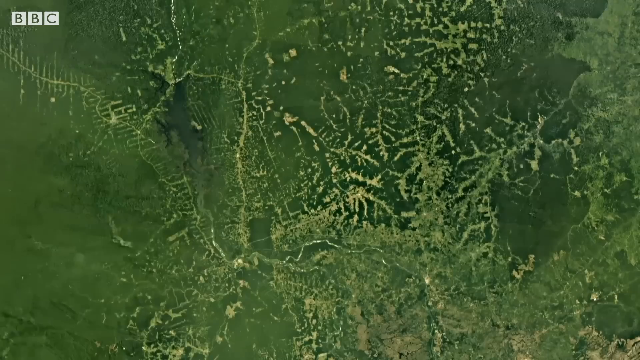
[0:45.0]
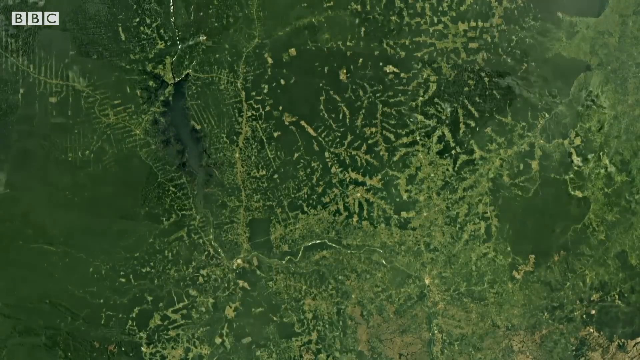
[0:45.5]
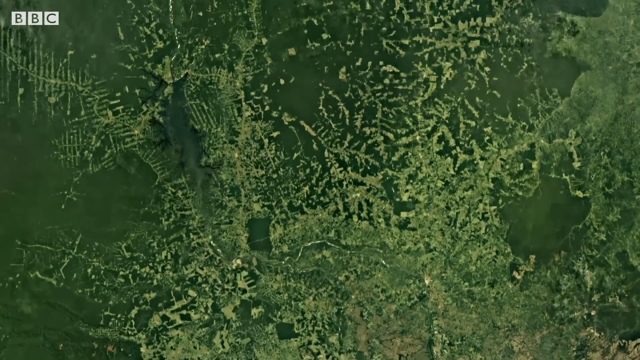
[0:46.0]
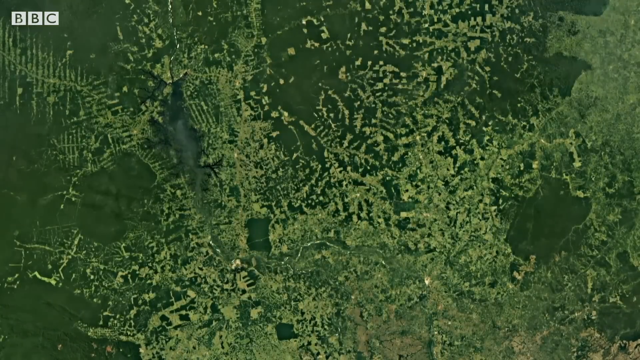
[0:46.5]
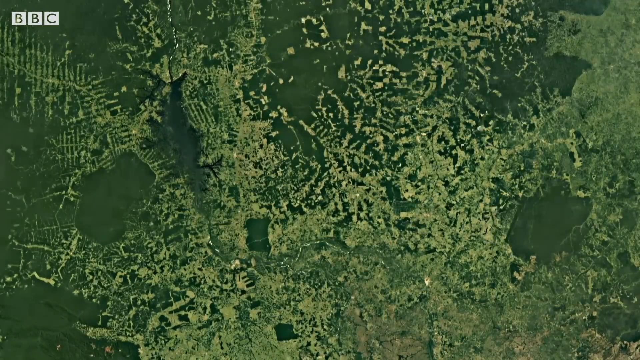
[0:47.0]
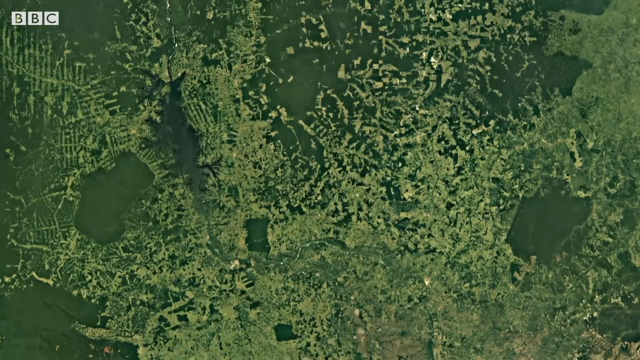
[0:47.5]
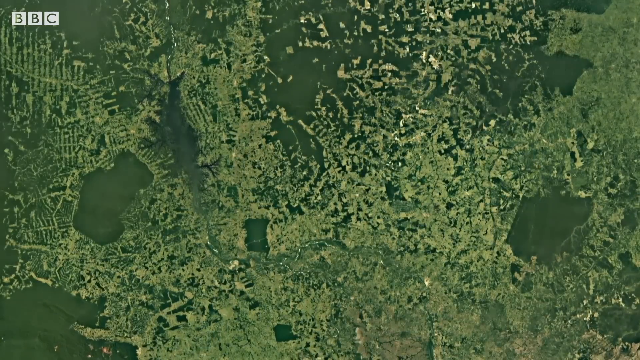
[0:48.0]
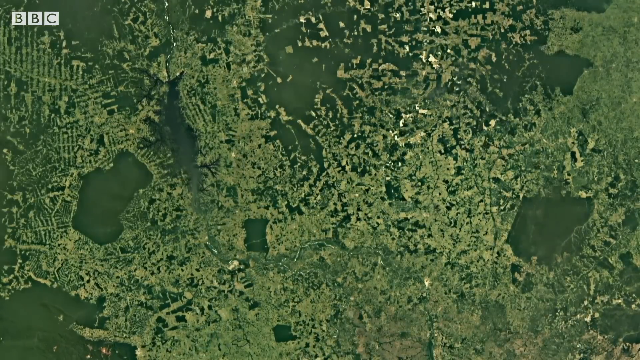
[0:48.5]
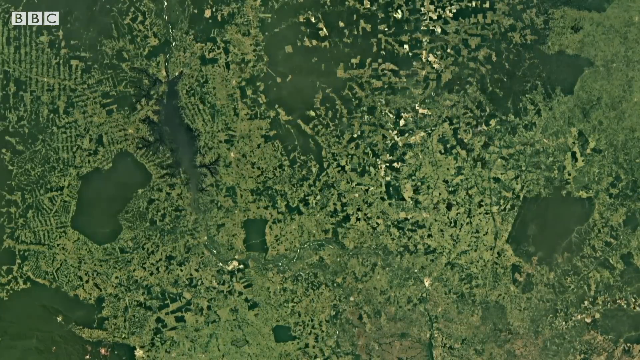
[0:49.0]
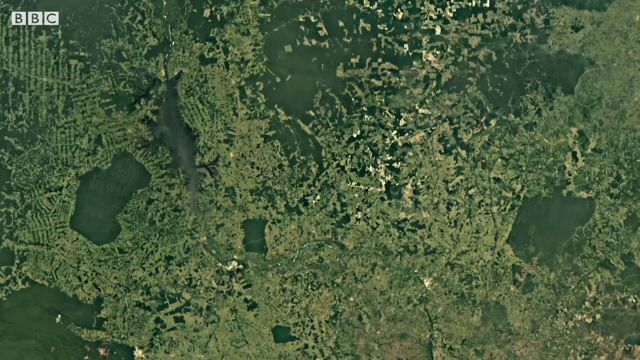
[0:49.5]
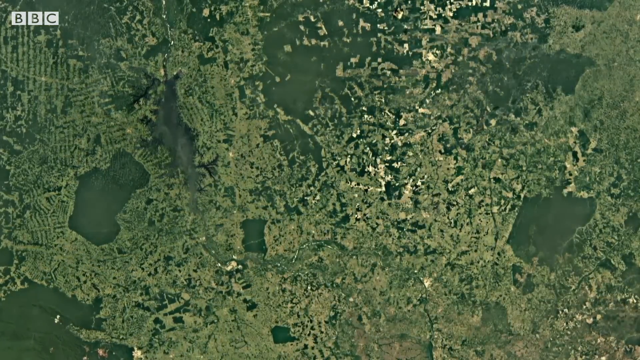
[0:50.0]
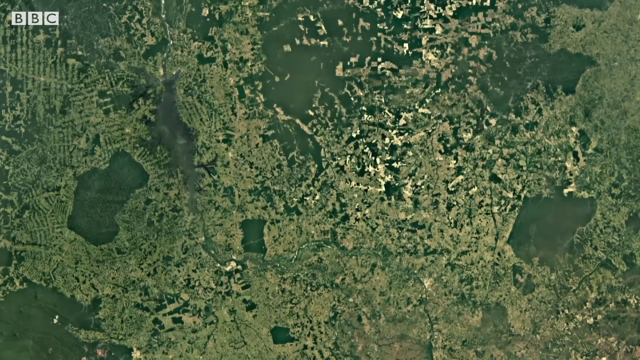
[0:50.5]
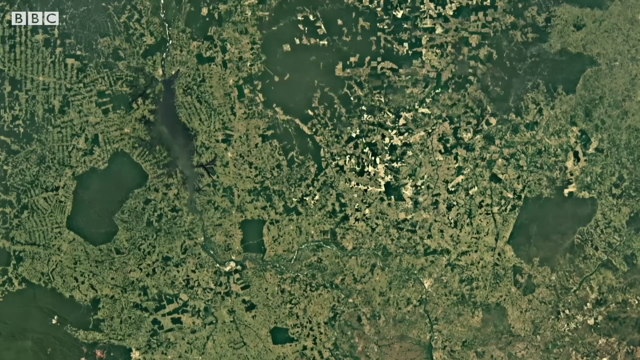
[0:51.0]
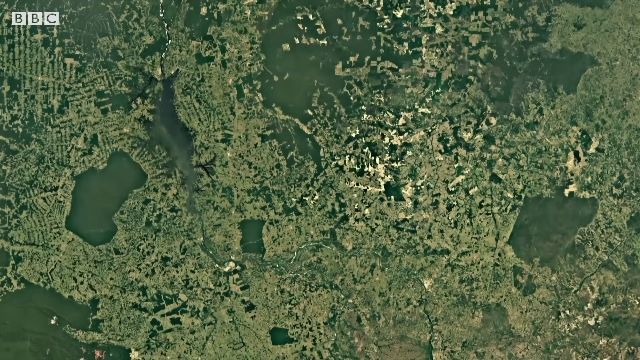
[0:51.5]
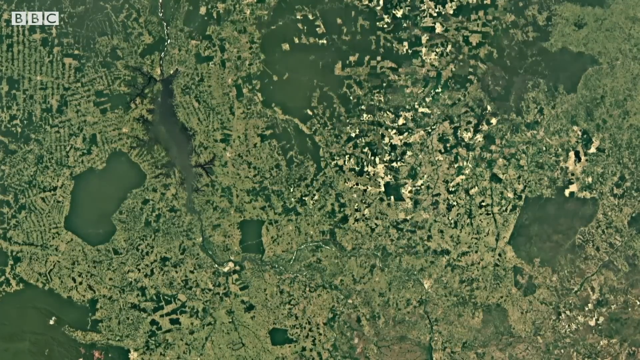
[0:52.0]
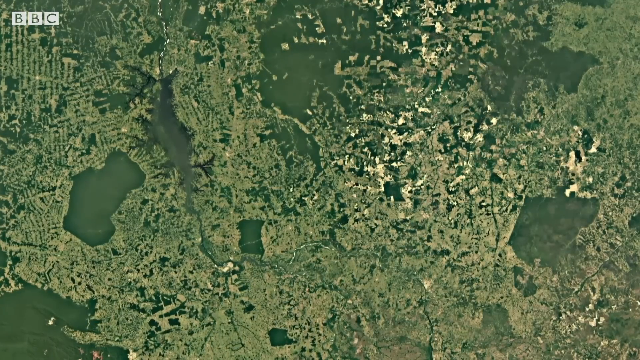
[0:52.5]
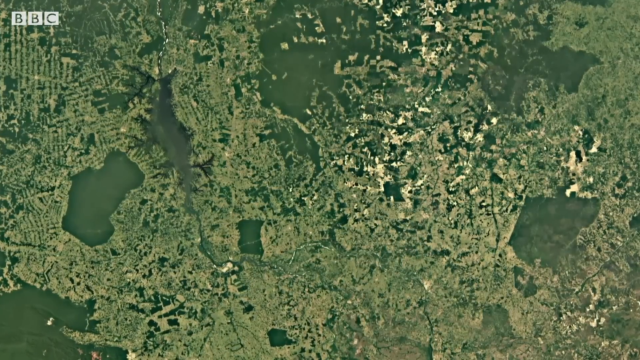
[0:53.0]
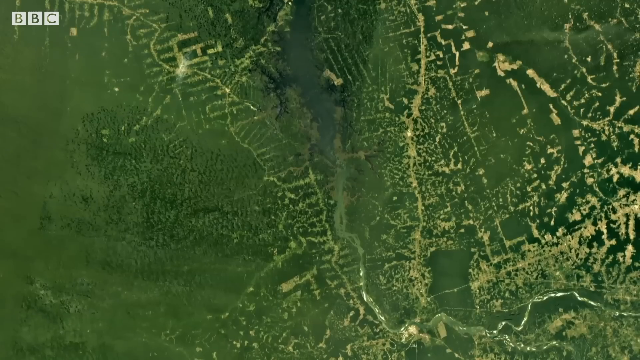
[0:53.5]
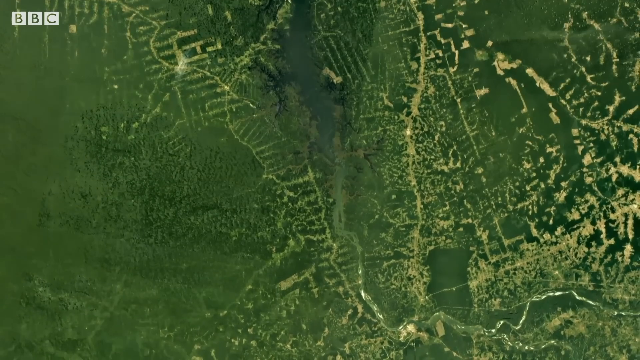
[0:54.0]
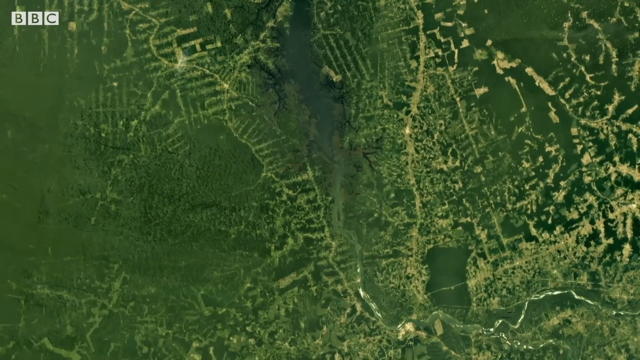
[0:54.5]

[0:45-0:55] More of the same effect follows. A far-away sky view starts out very dark green, then transitions to light yellow and then becomes very sandy looking, with some patches much brighter than others. Another sky view follows, visible only for a couple of seconds: some sort of path or road cuts through a bunch of trees on the right side, almost like a park or a golf course, while the left side is basically nothing but trees and grass, with no other noticeable roads or patches of dirt. The area by the golf course becomes more and more pale yellow.